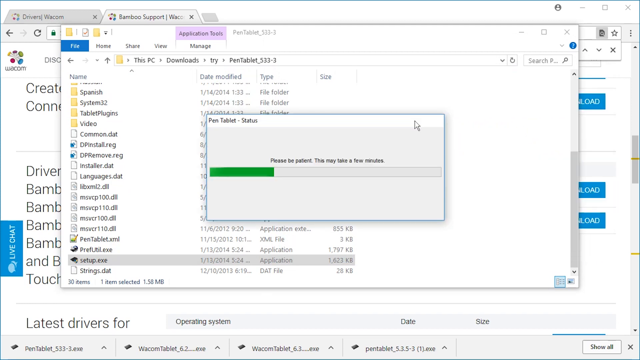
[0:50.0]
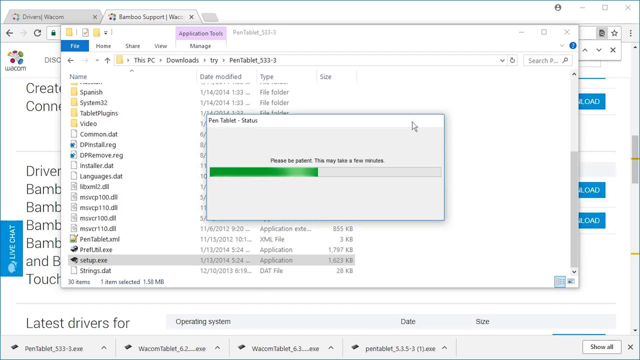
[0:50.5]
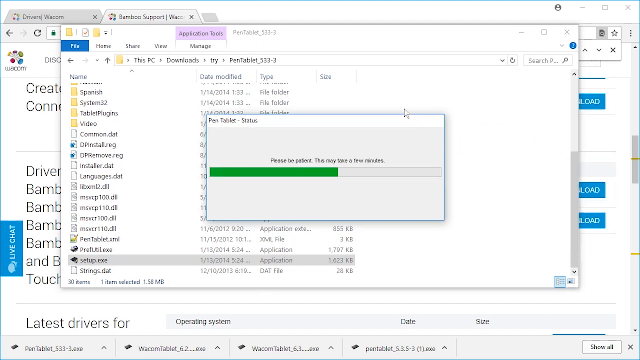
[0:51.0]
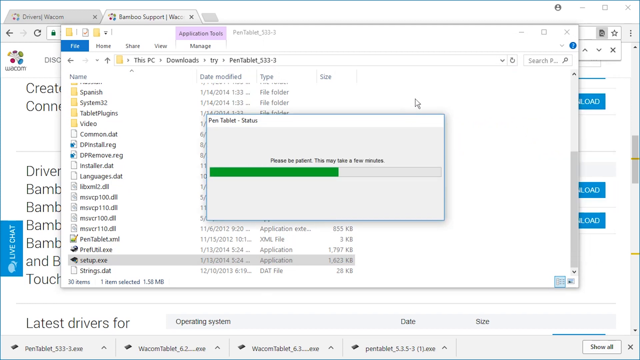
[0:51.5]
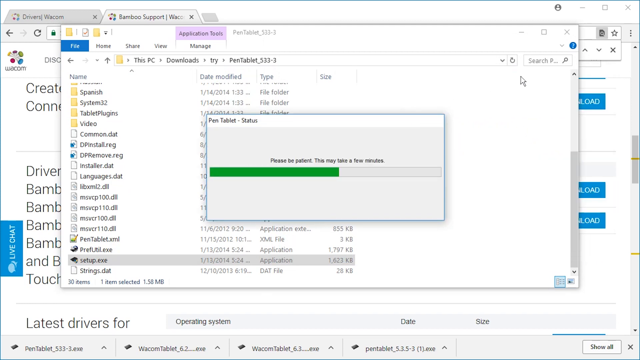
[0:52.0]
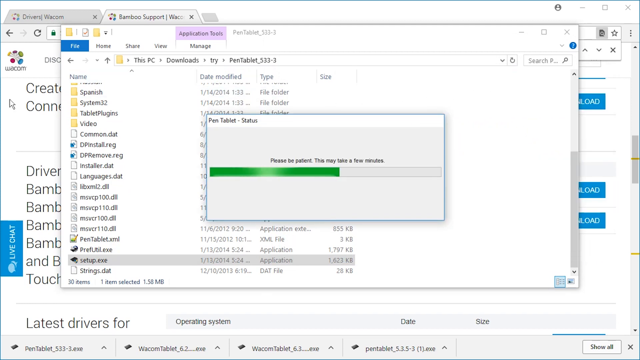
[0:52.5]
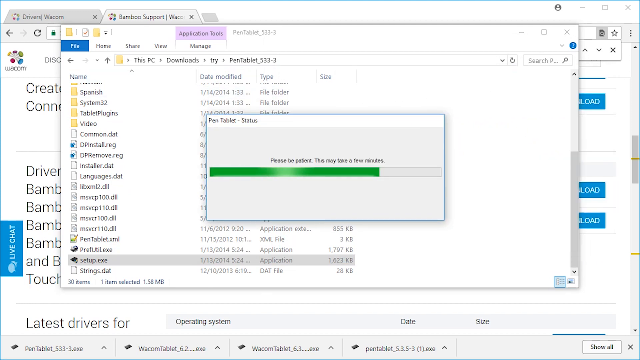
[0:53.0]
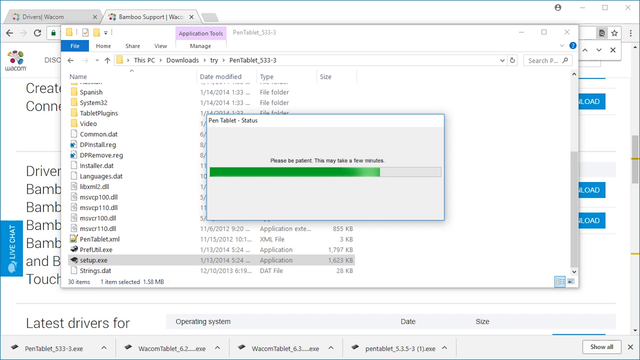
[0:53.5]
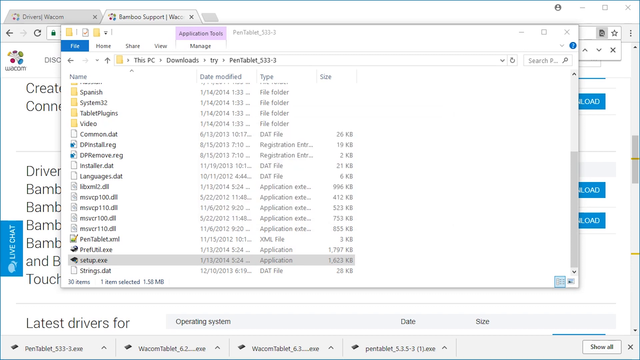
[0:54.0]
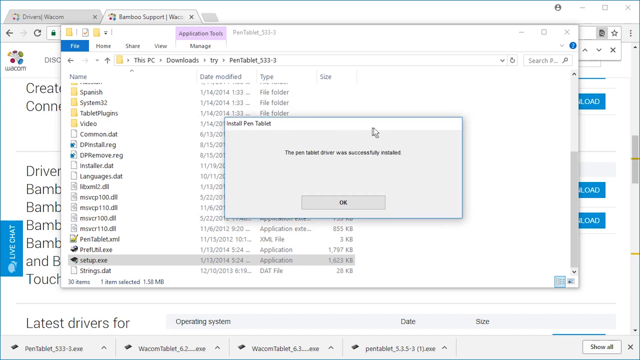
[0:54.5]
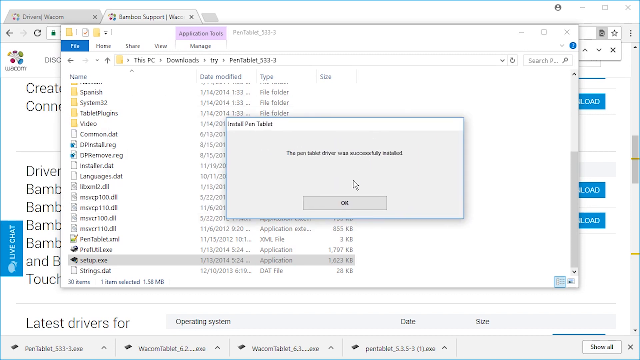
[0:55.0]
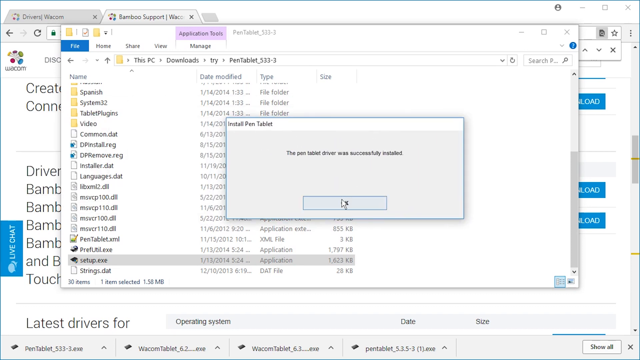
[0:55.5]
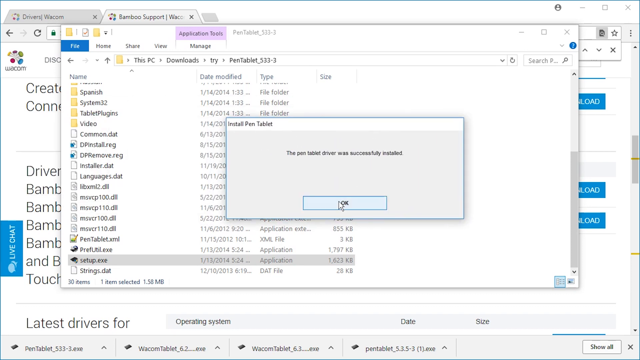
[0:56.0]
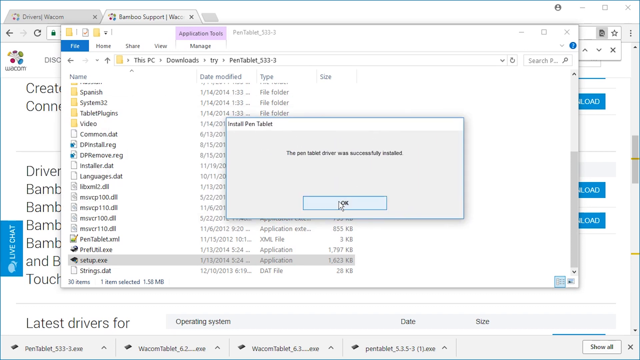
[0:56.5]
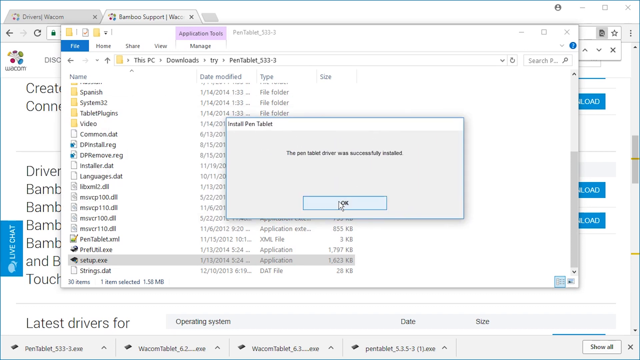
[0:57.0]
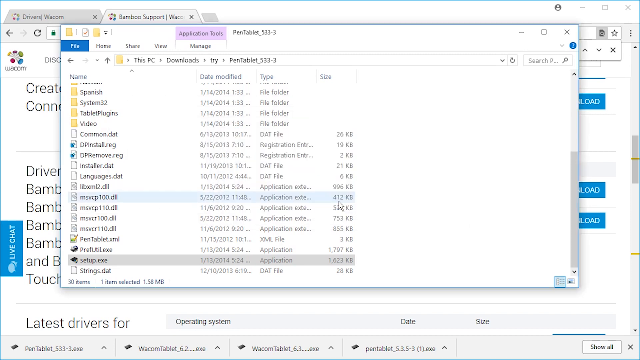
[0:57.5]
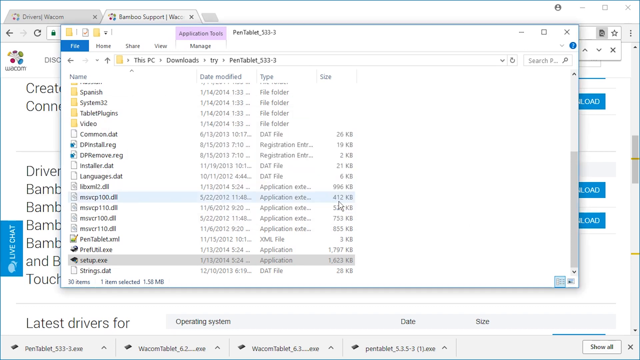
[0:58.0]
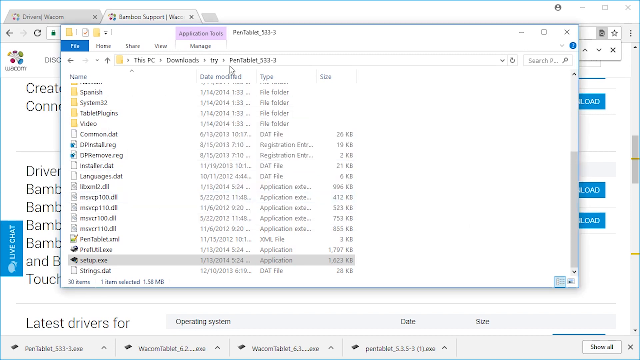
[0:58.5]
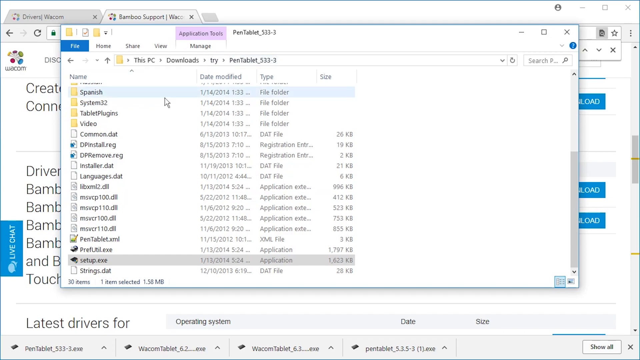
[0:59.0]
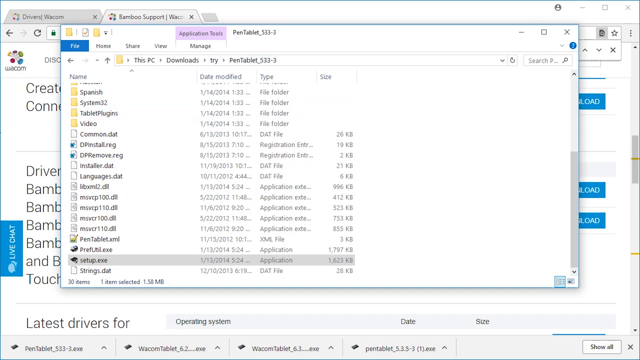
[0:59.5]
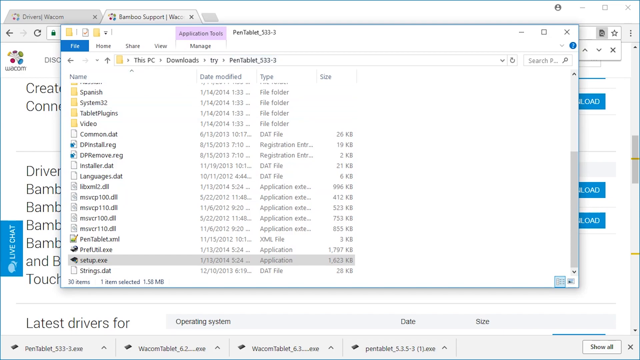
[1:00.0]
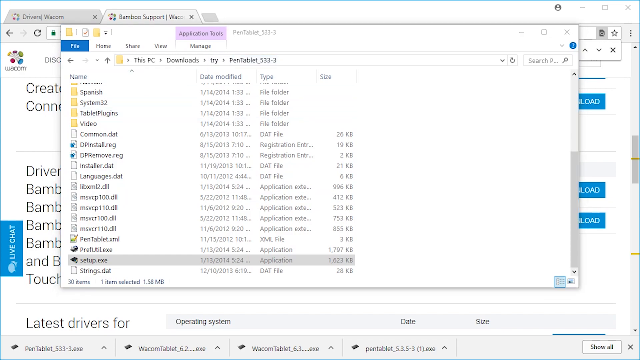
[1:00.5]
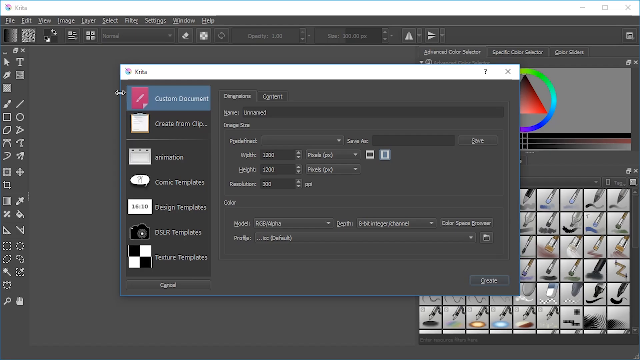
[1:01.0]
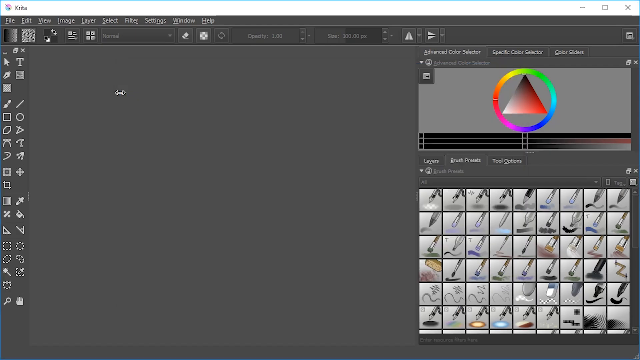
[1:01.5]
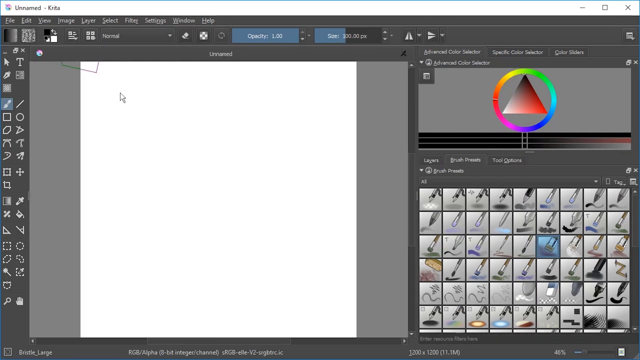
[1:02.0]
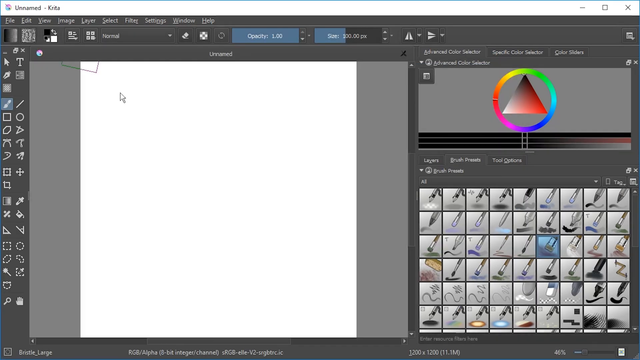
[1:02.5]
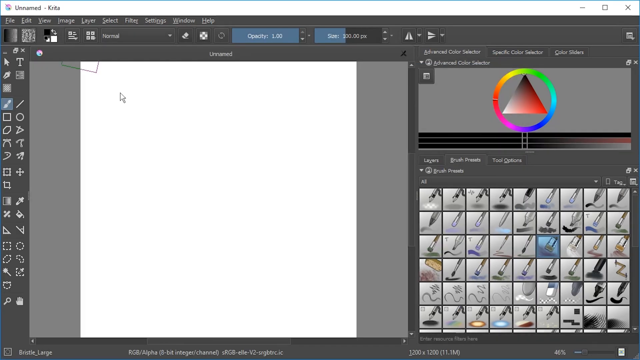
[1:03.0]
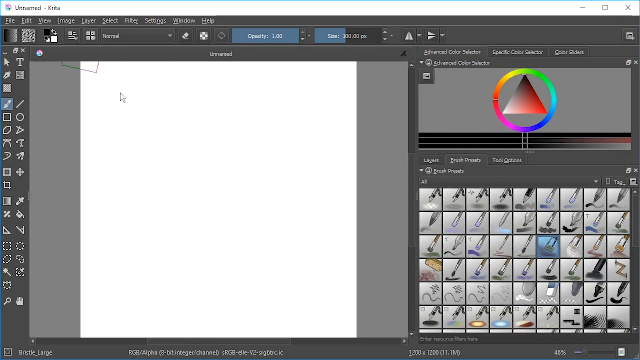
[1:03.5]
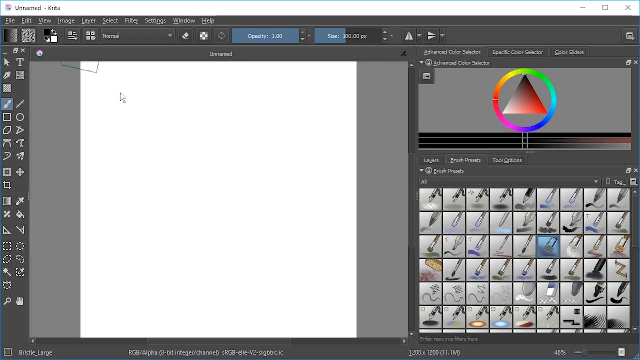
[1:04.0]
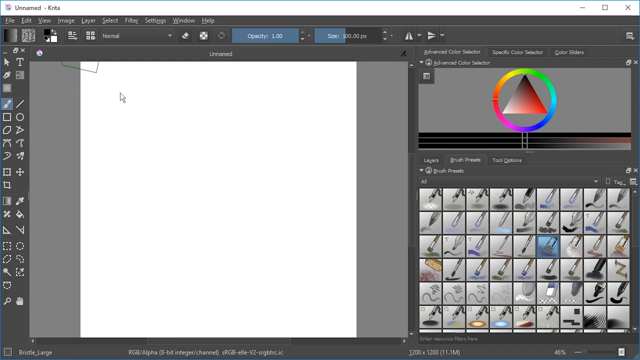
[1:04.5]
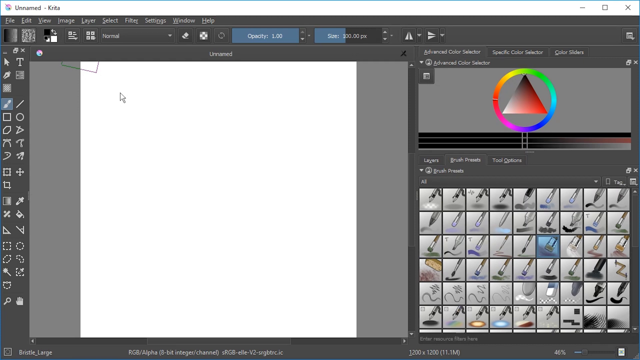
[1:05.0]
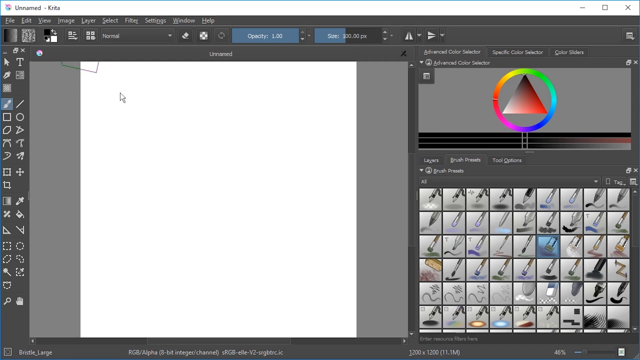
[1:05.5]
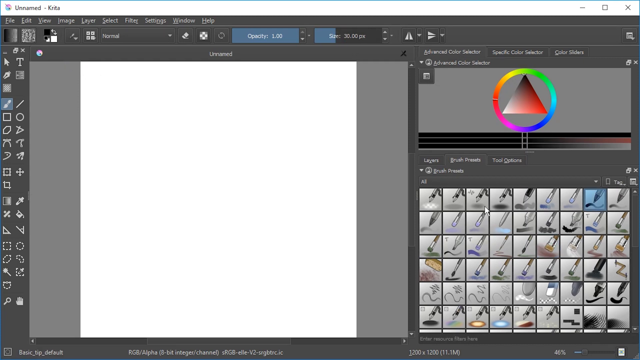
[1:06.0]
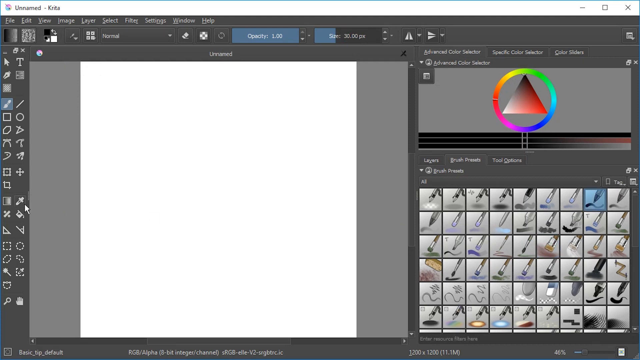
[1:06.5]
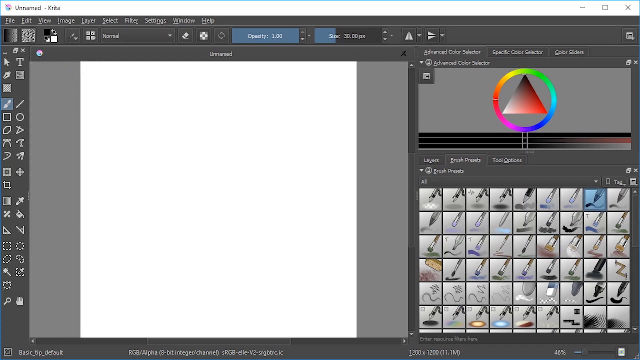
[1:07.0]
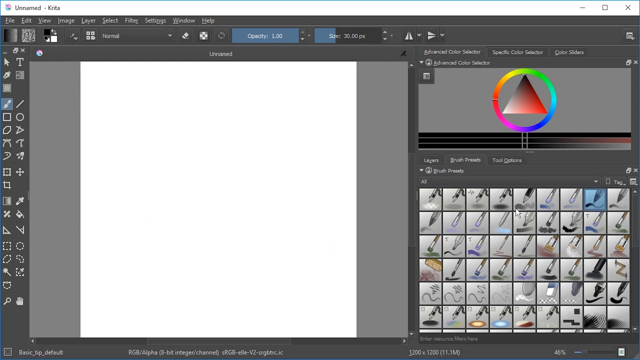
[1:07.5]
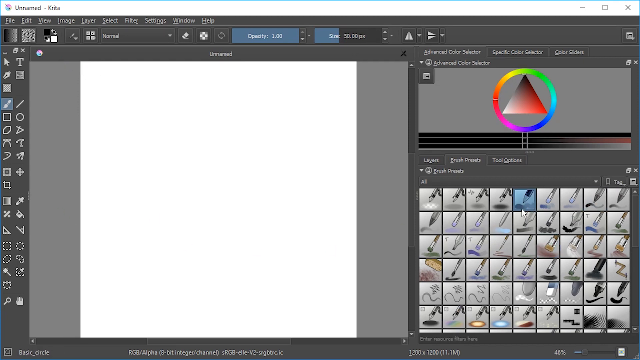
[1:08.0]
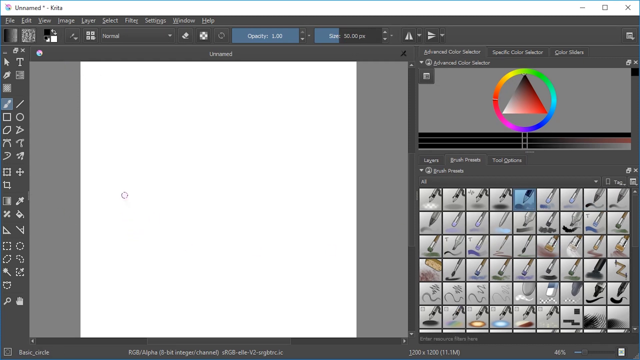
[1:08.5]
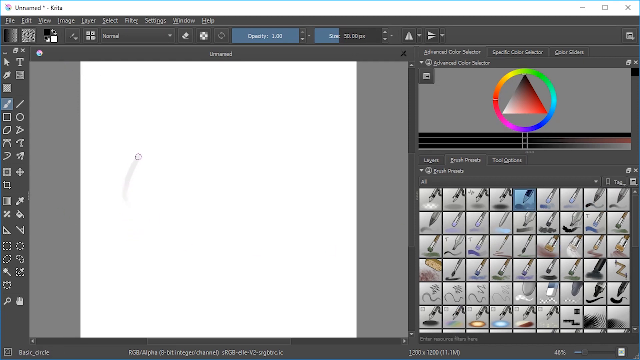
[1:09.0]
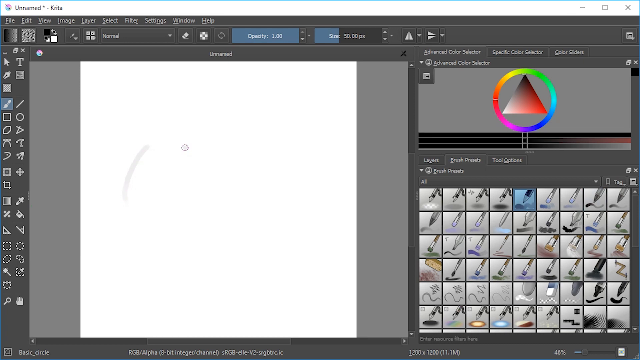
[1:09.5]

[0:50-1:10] A Windows install screen reads "pen tablet status" and "please be patient. This may take a few minutes." It is a standard Windows install window with a white upper bar, a gray background, and a green progress bar right below it that expands while the cursor moves around oddly to various places. A message then appears that the pen tablet was successfully installed. The cursor looks at some of the files before a pen tablet window labeled unnamed, K-R-I-T-A, pops up. It apparently shows the pen tablet drawing a gray, kind of curved line and then a gray-to-black curly line. The pen tablet icons are all on the right-hand side, along with a red, green and blue triangle for picking colors.